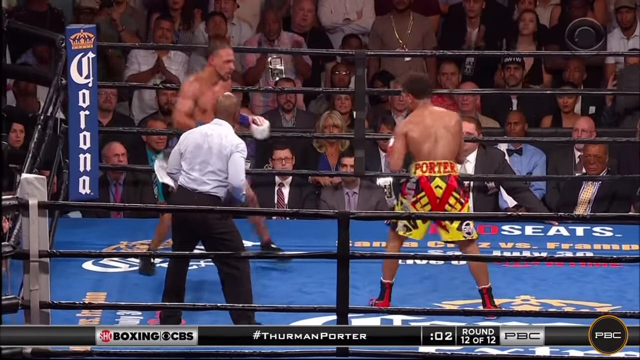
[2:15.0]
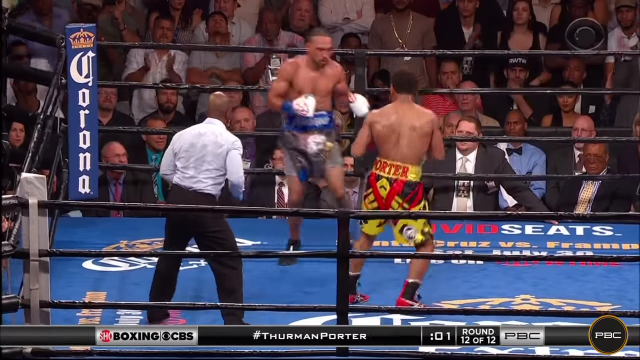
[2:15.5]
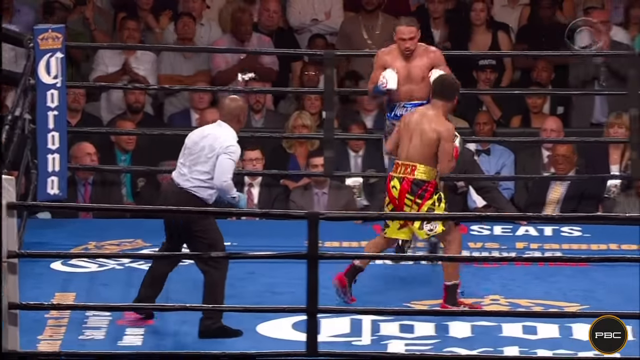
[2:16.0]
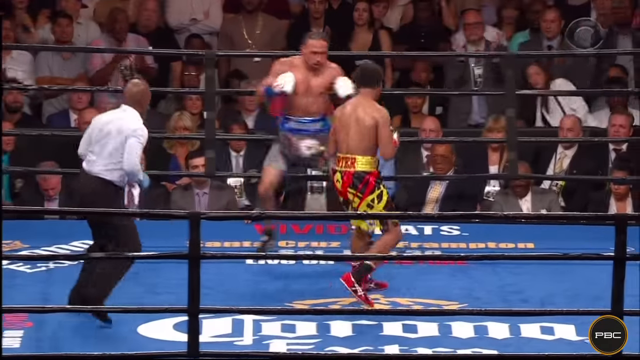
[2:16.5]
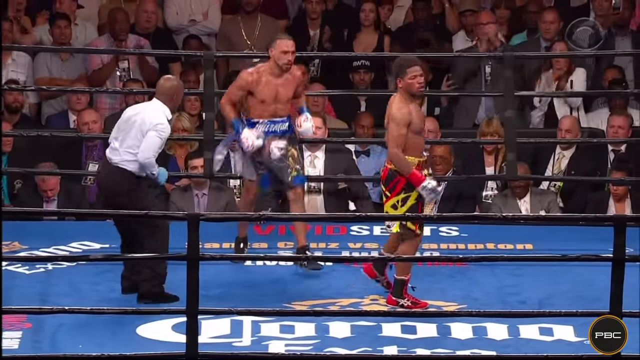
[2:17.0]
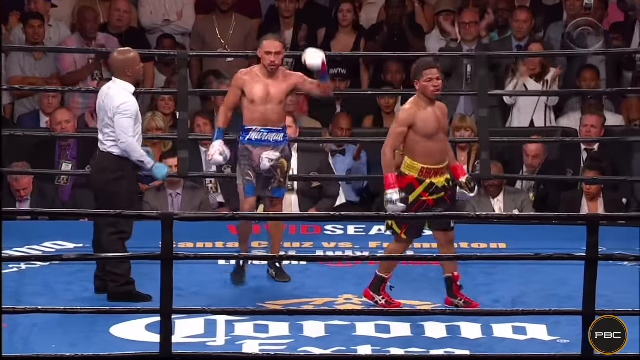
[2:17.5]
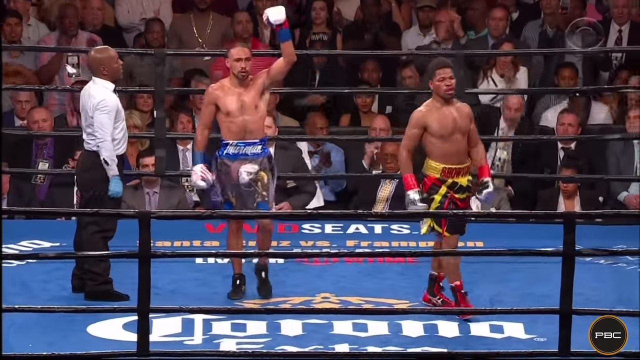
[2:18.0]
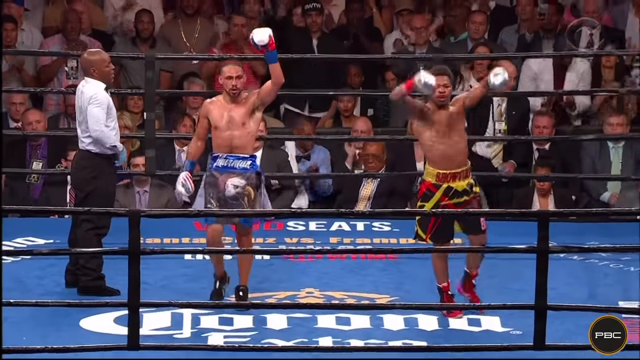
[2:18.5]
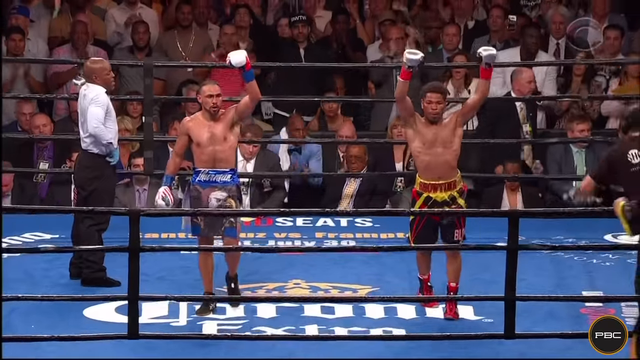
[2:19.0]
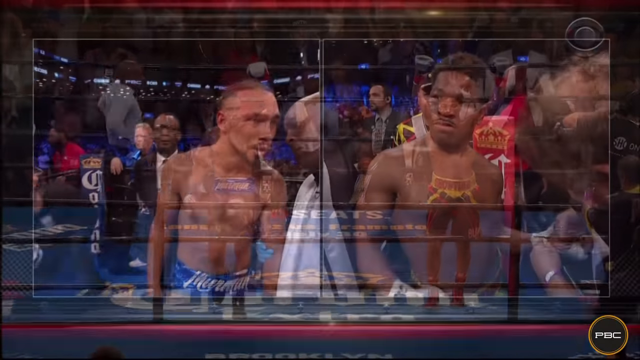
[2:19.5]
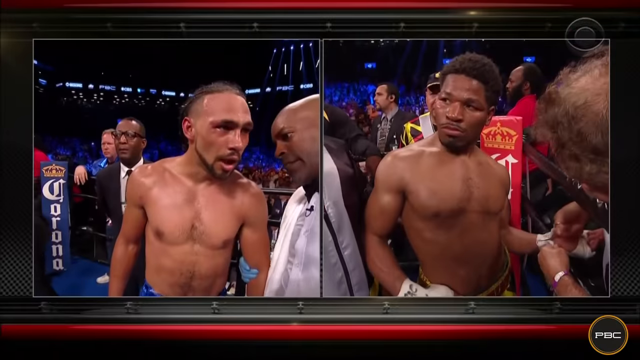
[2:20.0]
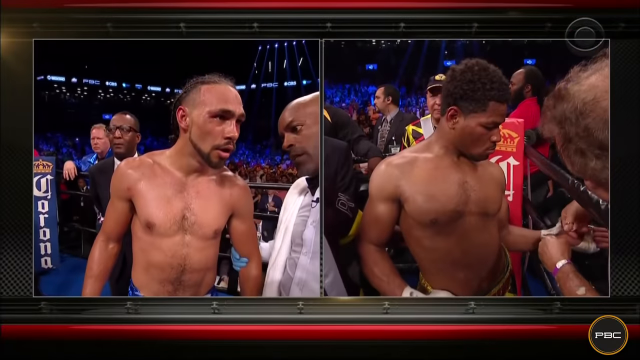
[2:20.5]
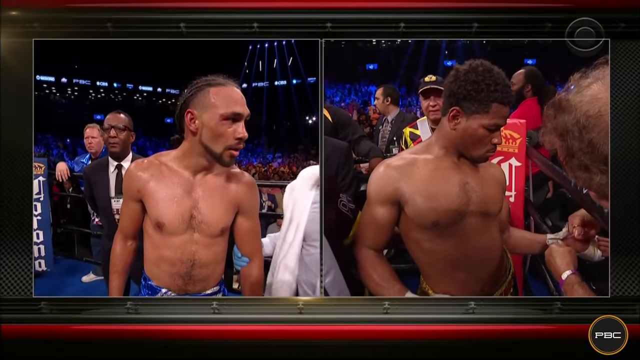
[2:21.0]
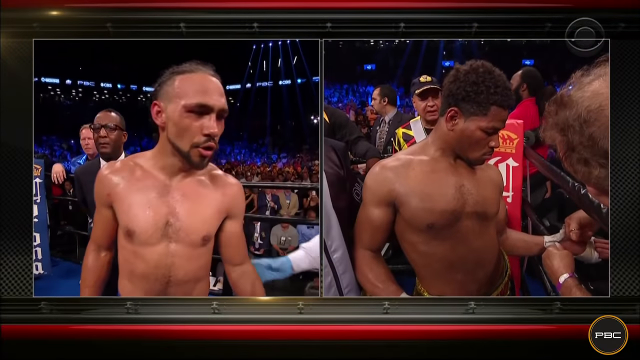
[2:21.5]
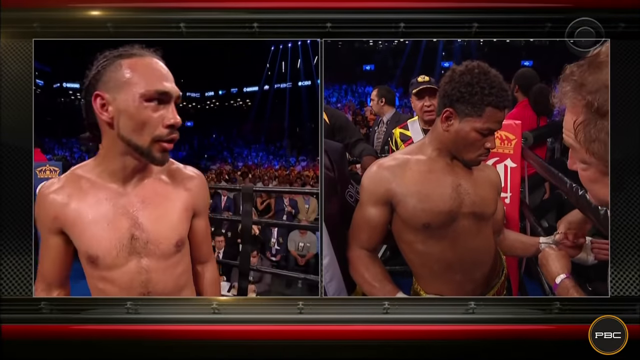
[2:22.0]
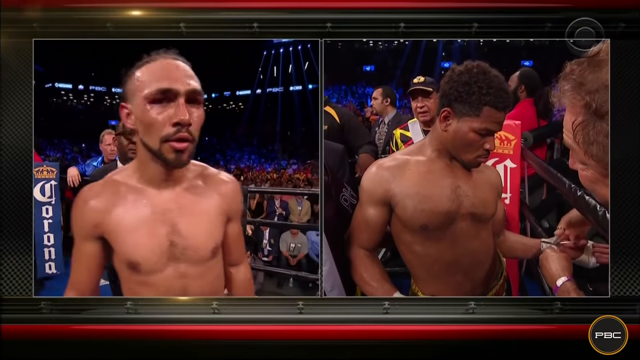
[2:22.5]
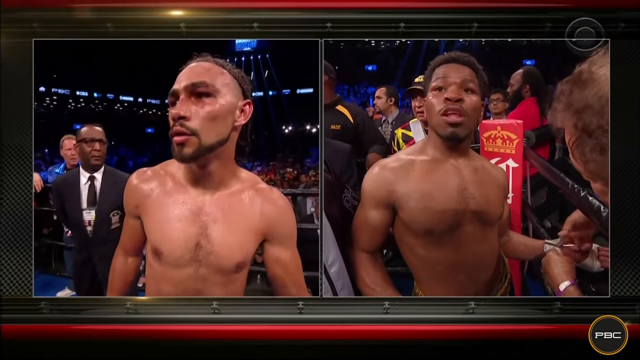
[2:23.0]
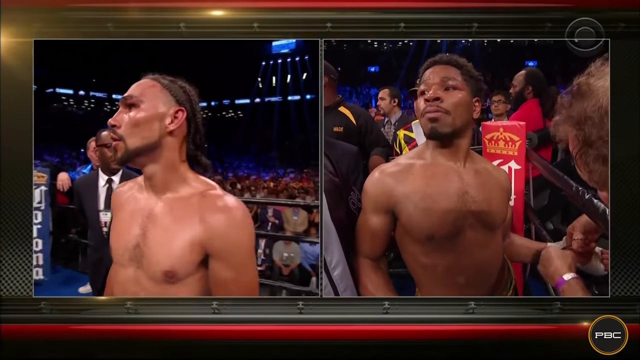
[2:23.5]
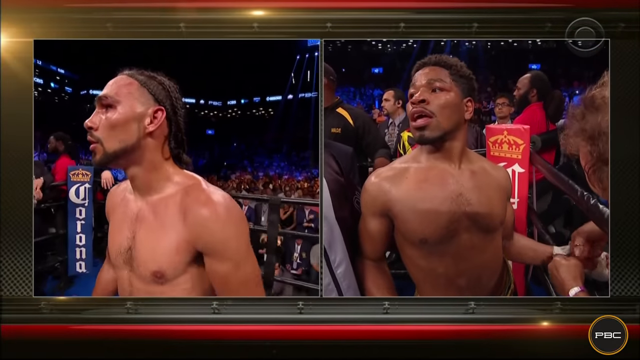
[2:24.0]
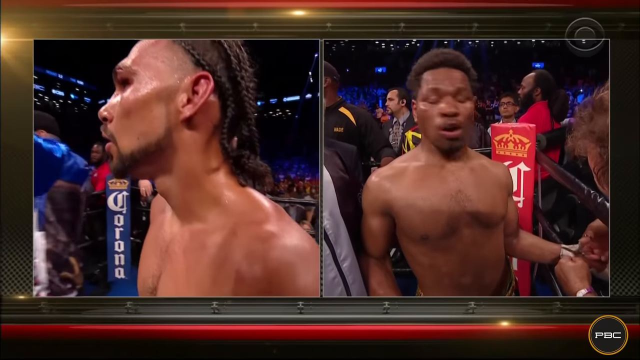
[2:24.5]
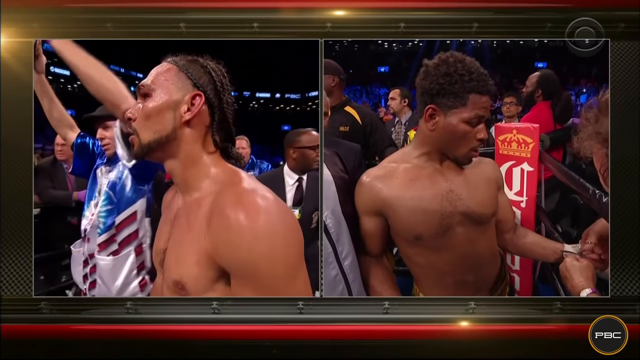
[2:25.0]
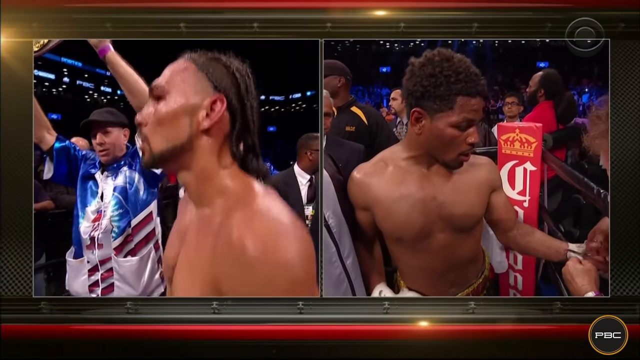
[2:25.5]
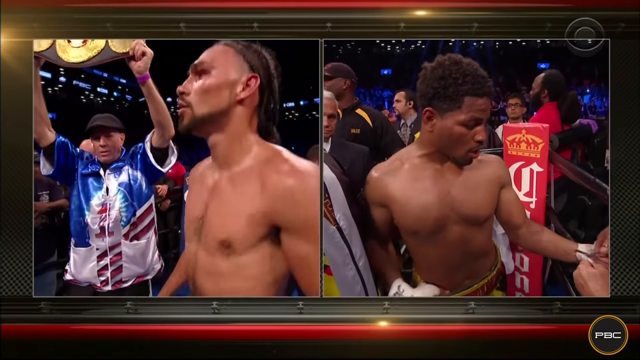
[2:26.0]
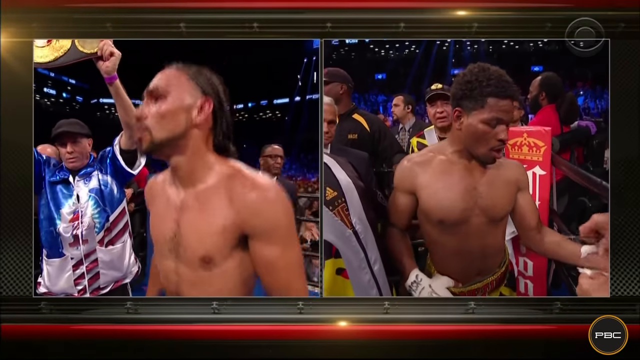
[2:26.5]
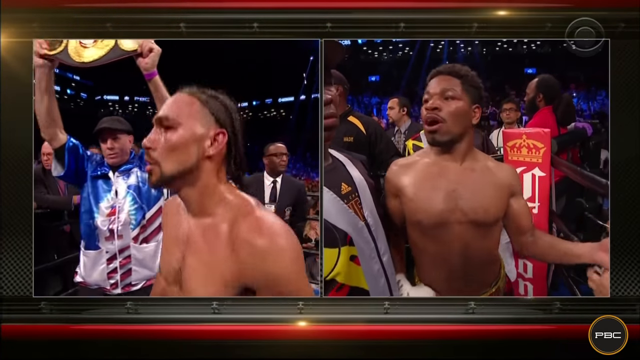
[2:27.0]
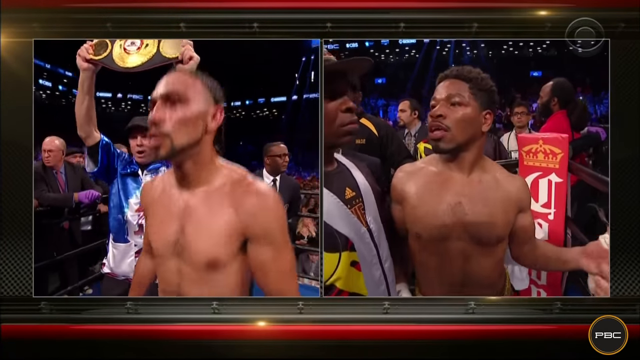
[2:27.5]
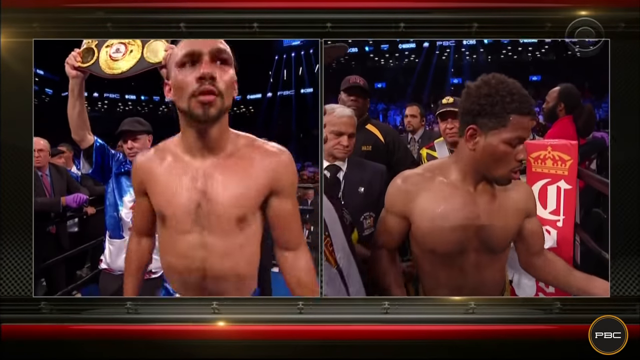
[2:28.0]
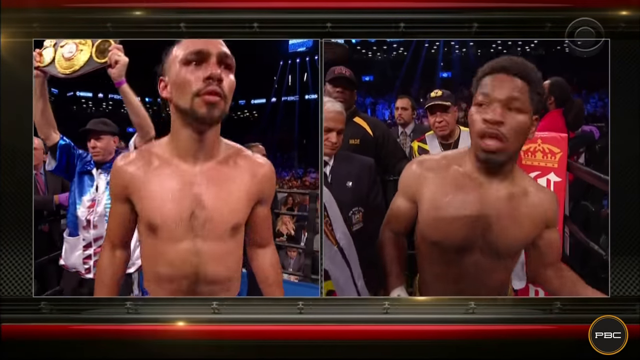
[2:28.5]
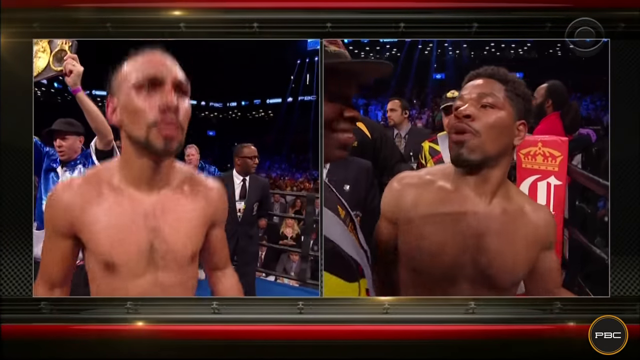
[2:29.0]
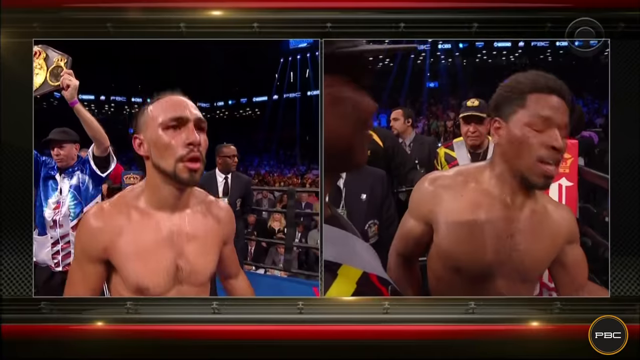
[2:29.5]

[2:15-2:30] As the final seconds of round 12 tick away, the fighters face toward the camera, which is far in the distance, and lift their hands in victory. The fighter in blue is on the left; he appears to have a bald eagle graphic on the front of his shorts and holds one arm up above his head. The fighter in black and yellow shorts is on the right and brings both arms up above his head. After a jump cut, two separate videos of the fighters are shown side by side. The fighter on the right, in black and yellow shorts, has darker brown skin; the fighter on the left wears blue shorts. Each talks to what appear to be his fight coach or managers in his corner as they await the decision, looking around the ring and the arena. Behind the fighter on the right is a red corner pad, and he has his arm outside the ring, apparently untying his boxing glove or wraps. Behind the fighter on the left, a large championship belt is held up above what appears to be his coach or manager in blue.